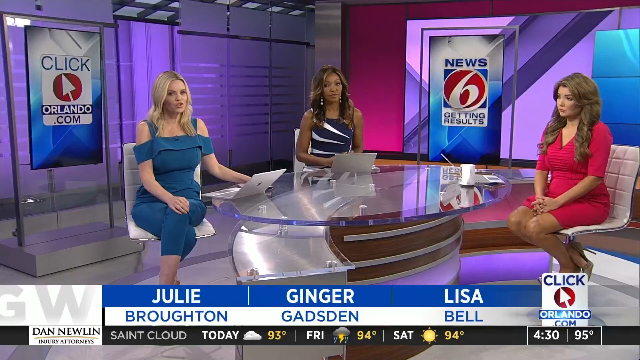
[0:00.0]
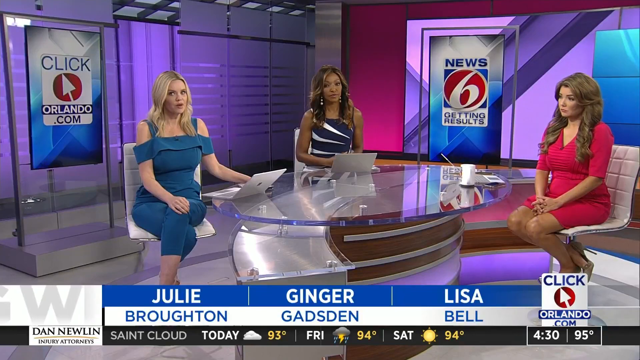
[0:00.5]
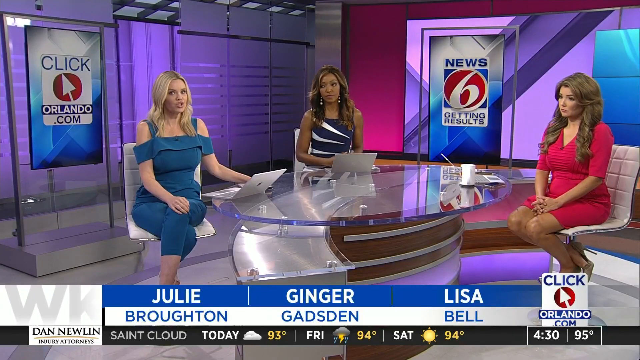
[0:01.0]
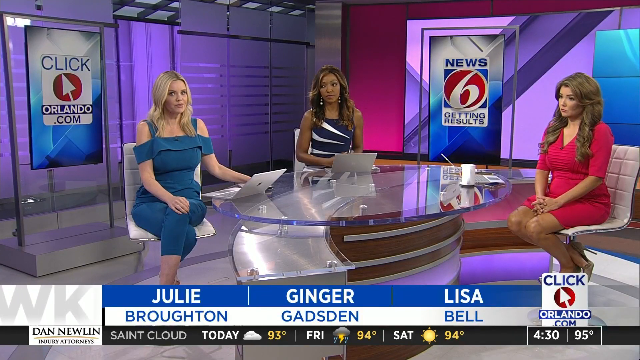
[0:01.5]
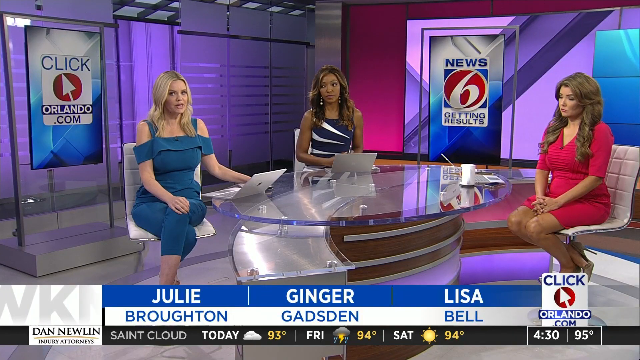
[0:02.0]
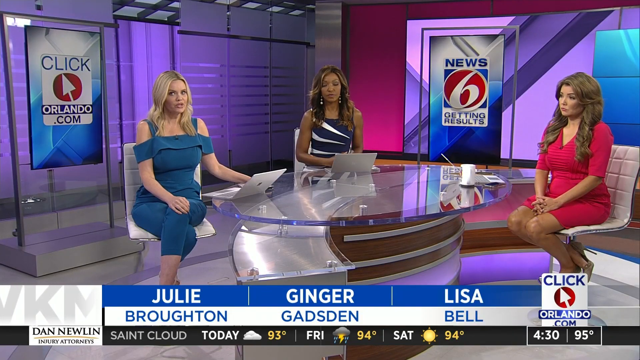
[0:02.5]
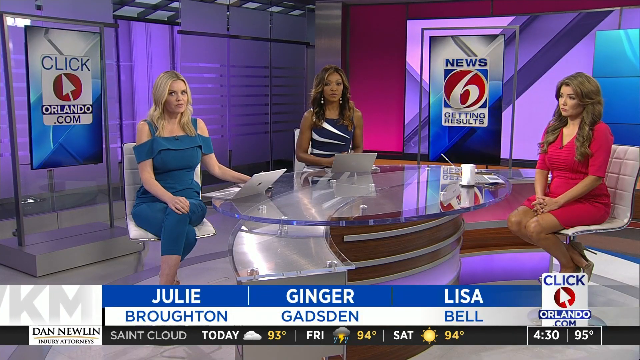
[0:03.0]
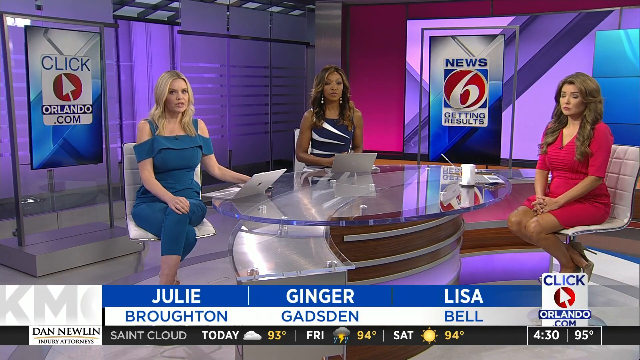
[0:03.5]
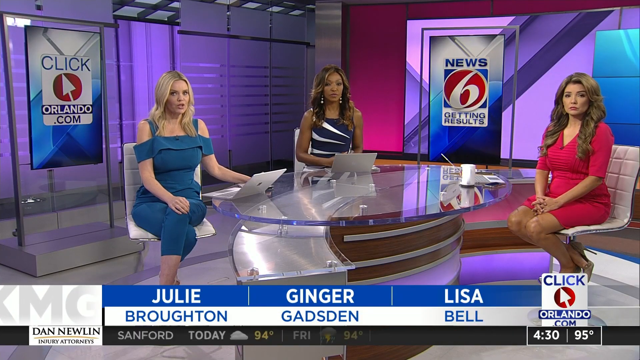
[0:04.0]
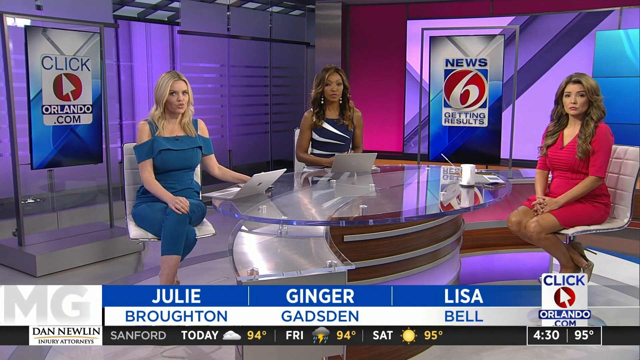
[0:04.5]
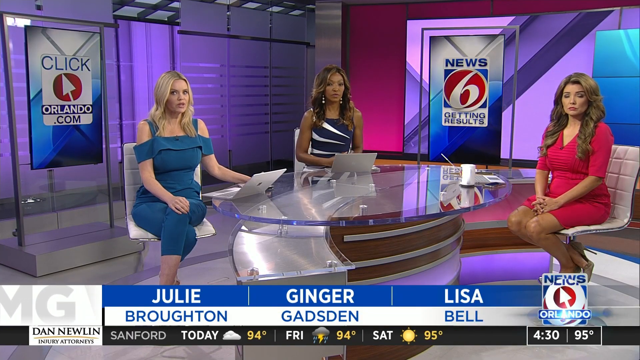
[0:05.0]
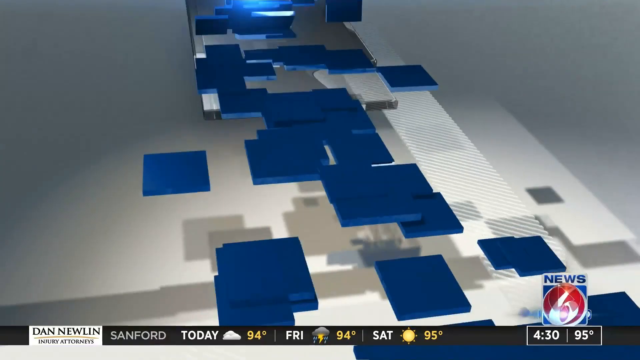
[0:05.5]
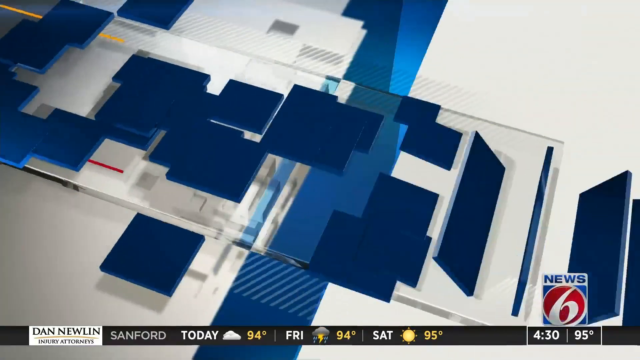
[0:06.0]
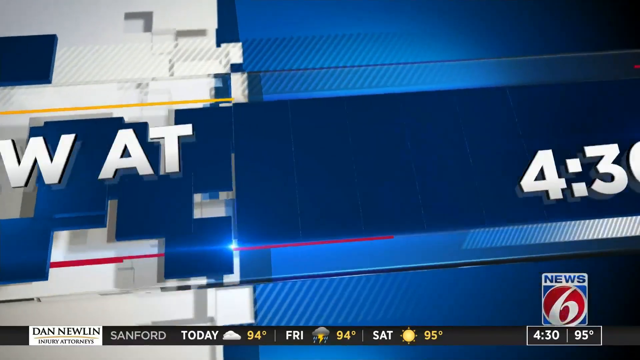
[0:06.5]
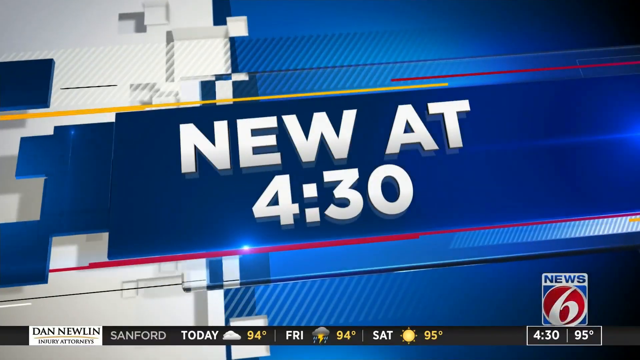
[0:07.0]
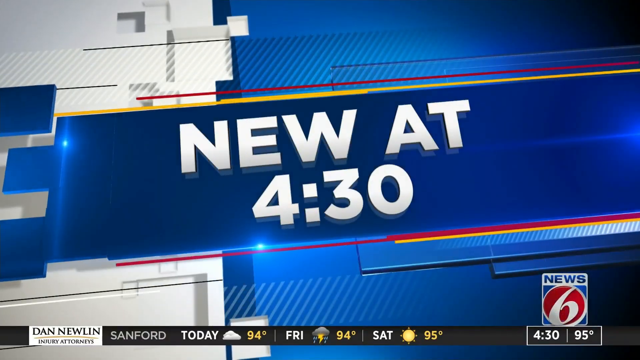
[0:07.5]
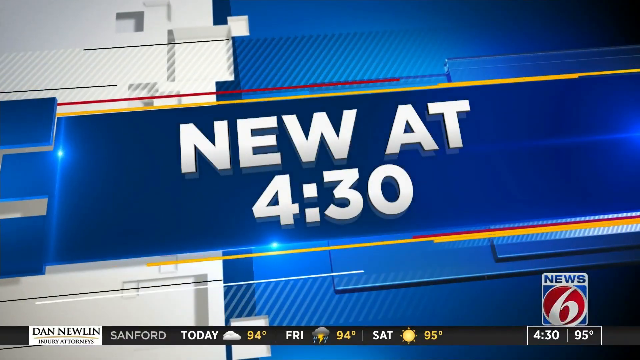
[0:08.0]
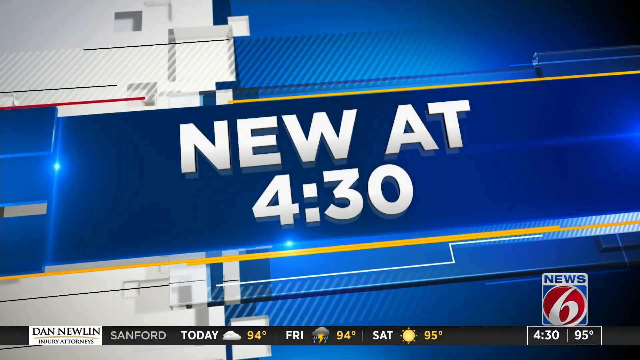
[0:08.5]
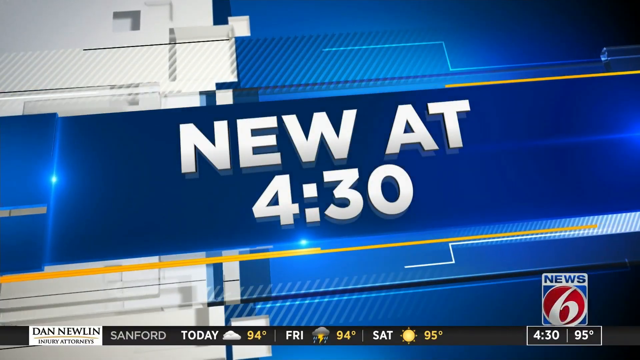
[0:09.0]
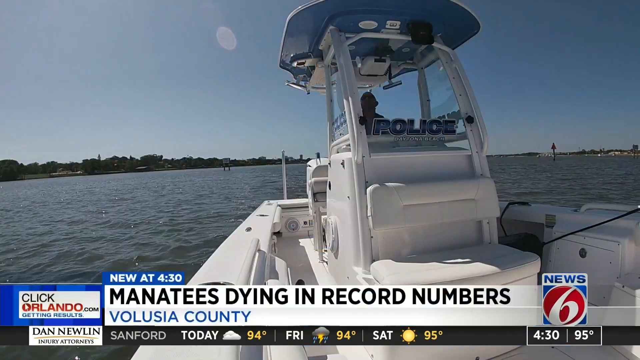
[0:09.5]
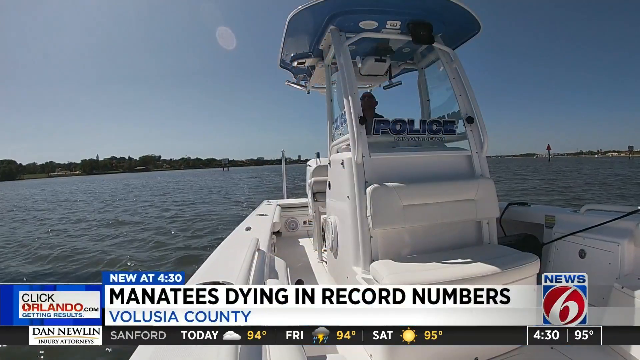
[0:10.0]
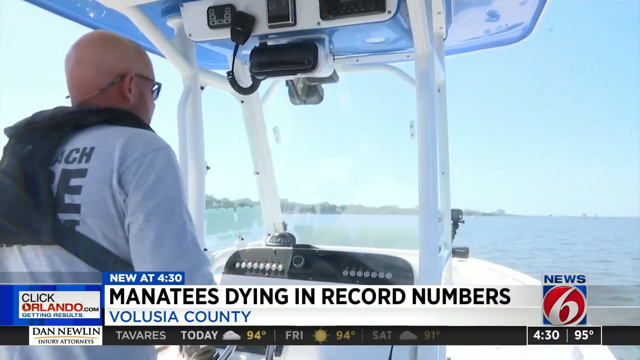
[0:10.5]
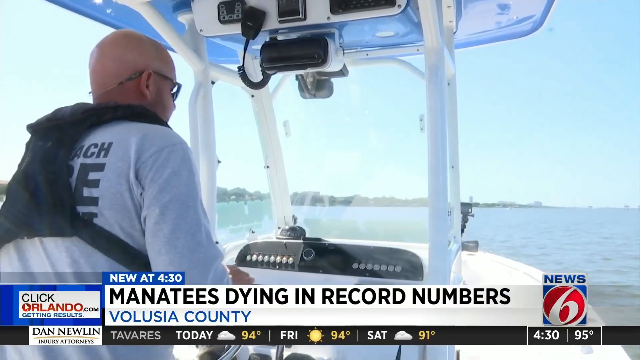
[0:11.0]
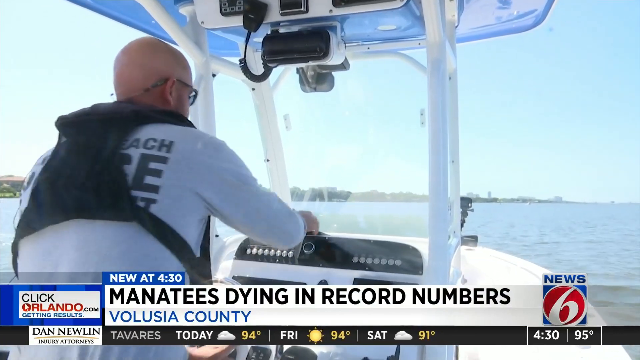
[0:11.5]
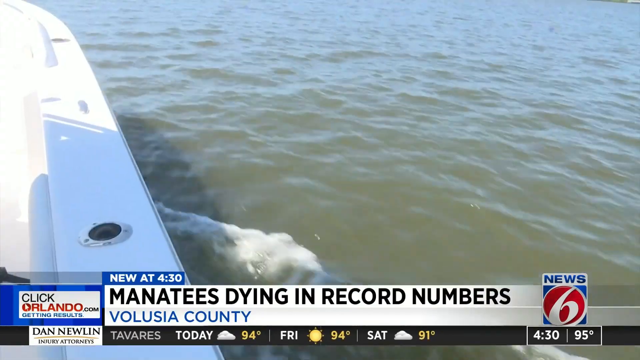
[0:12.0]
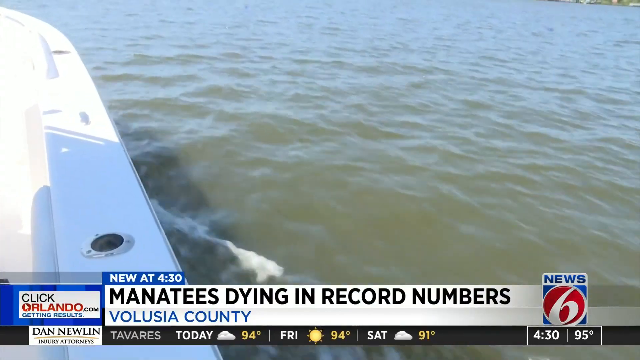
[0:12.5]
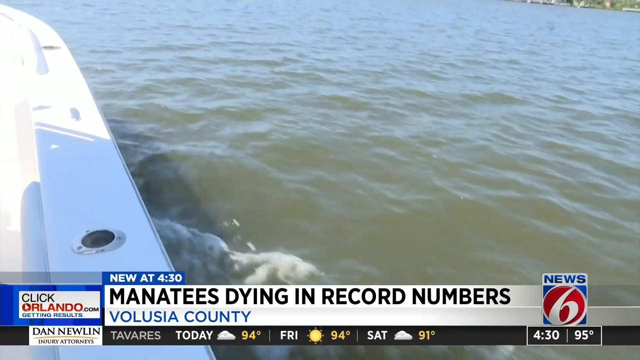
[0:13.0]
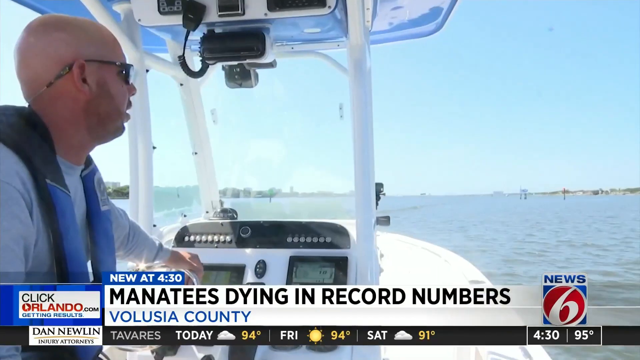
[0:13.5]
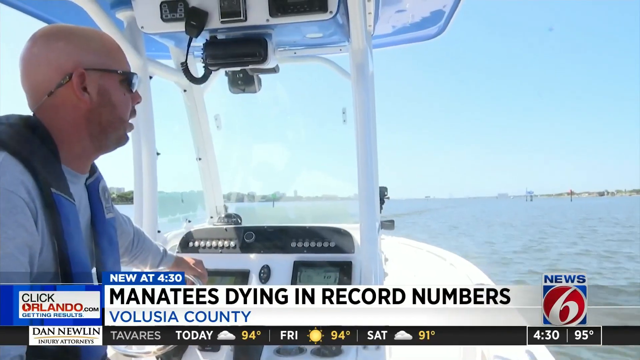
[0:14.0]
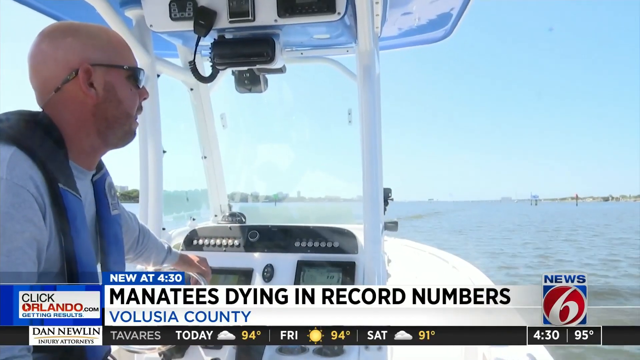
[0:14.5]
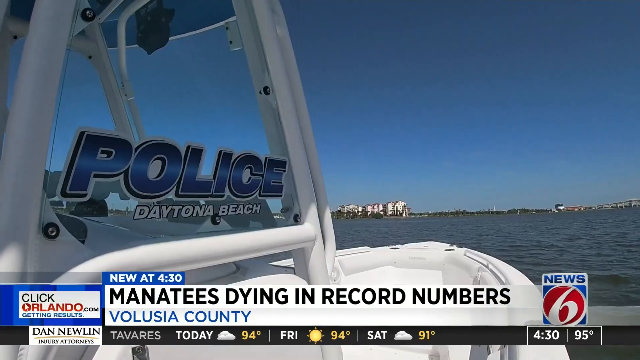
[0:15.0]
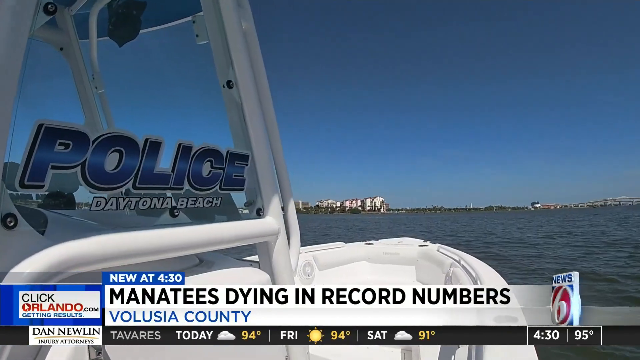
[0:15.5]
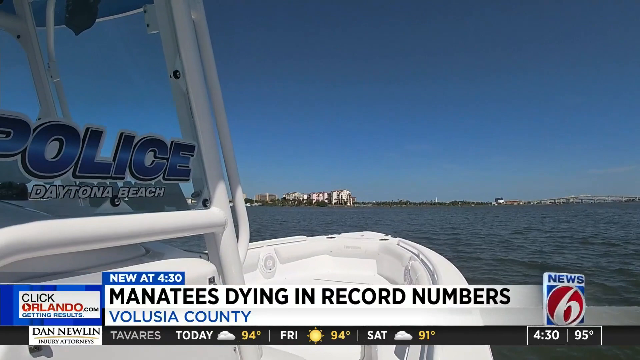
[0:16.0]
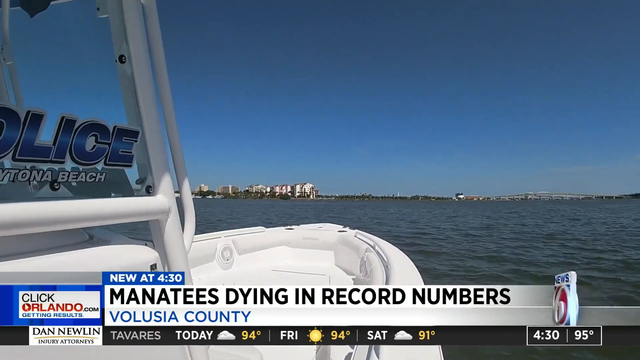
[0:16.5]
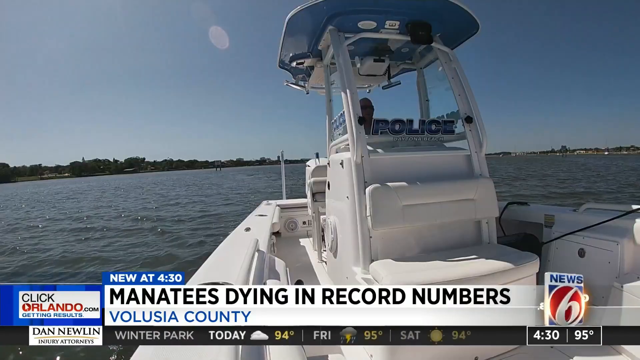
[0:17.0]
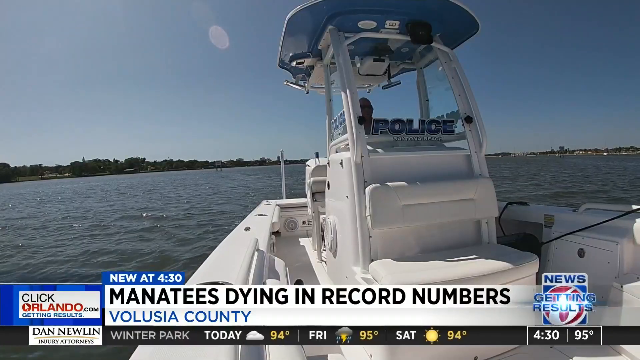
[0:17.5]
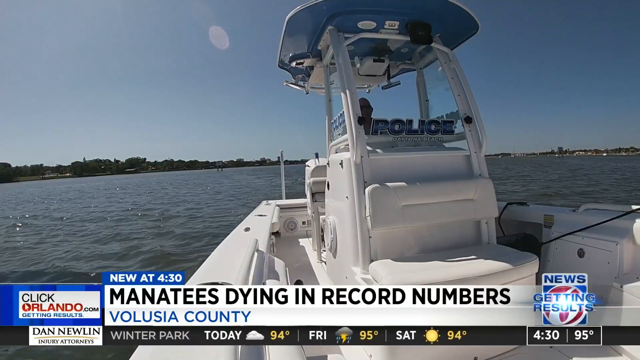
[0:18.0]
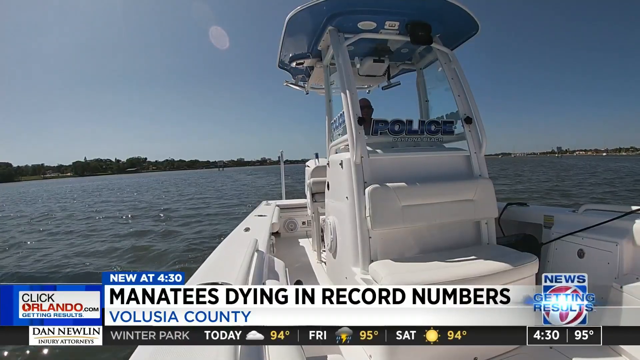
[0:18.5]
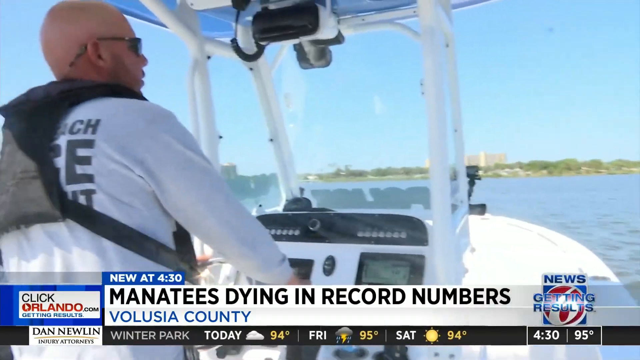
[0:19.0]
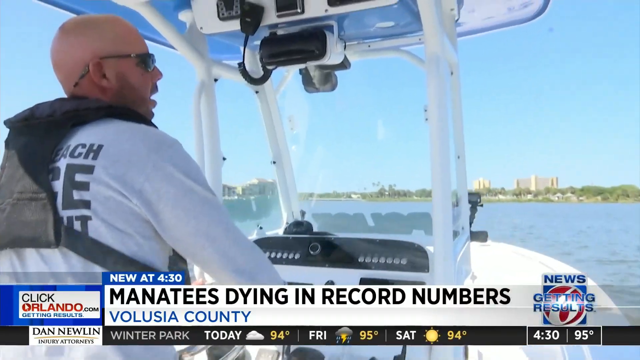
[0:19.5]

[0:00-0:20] The scene appears to be a newsroom in Orlando. Three women, Julie, Ginger and Lisa, sit at a table with laptops in front of all three of them and a mug of coffee in front of Lisa. Julie wears blue, Ginger wears black and white, and Lisa wears red. A sign behind them reads "News 6 Getting Results," and a sign on the left reads "ClickOrlando.com." All three look at the camera with concerned expressions, and only Julie is speaking. The headline says that manatees are dying at a record rate, or in record numbers. The video then shows a police boat with a man, presumably a policeman, who has a bald head and sunglasses; he speaks about the headline and seems concerned as well. The water is murky. The events are presumably taking place in Orlando, or in a specific county near Orlando, Florida.